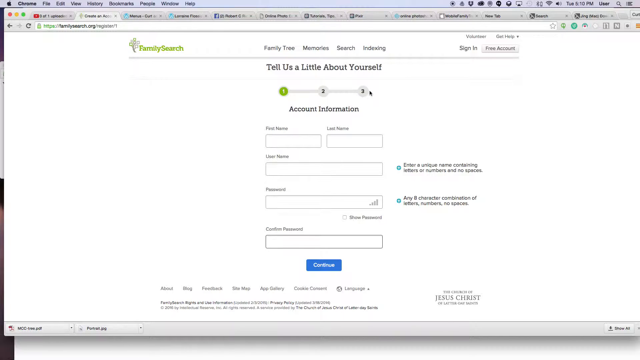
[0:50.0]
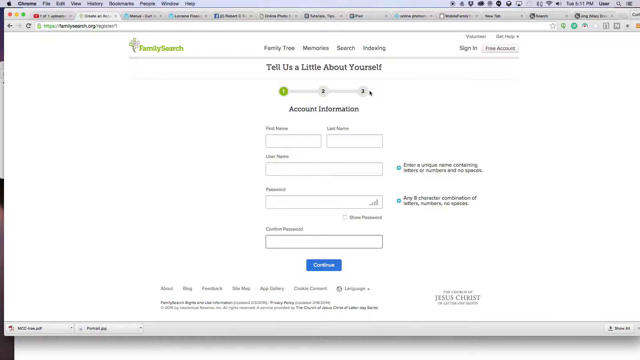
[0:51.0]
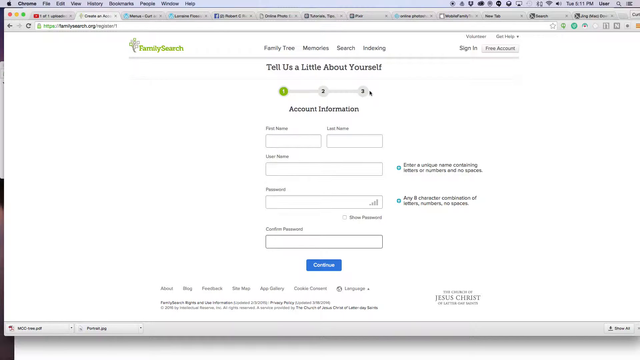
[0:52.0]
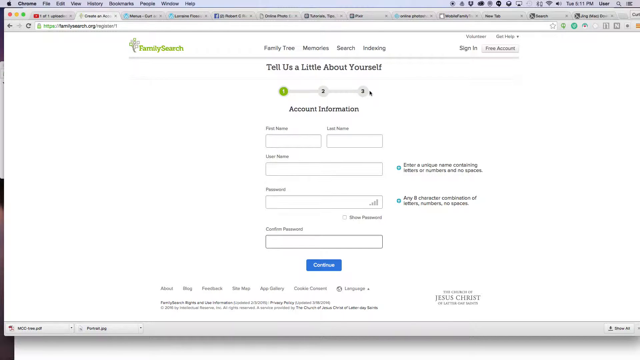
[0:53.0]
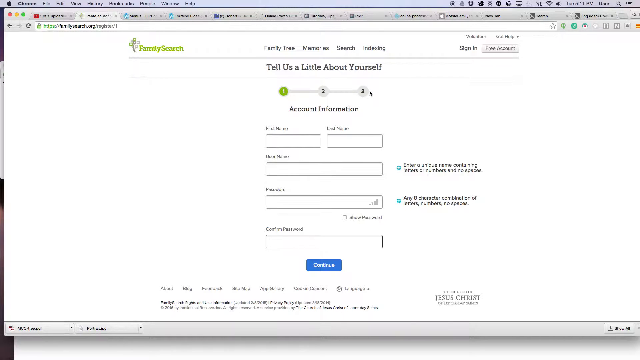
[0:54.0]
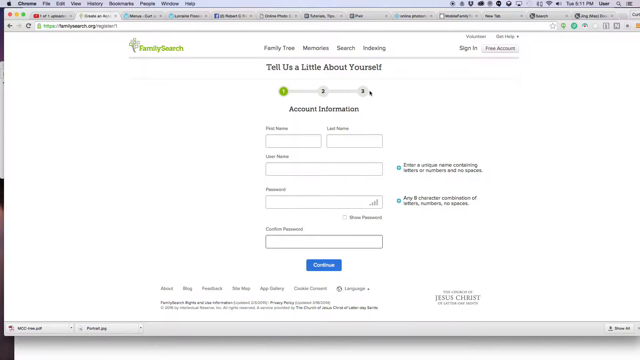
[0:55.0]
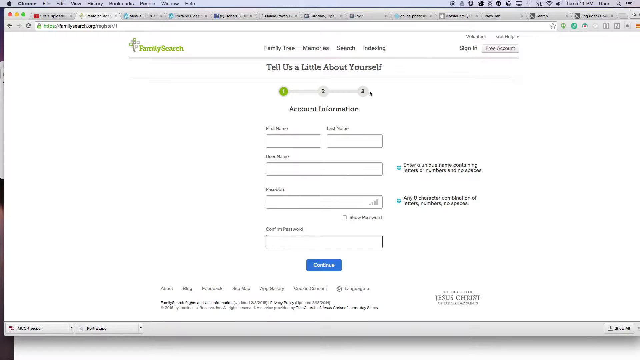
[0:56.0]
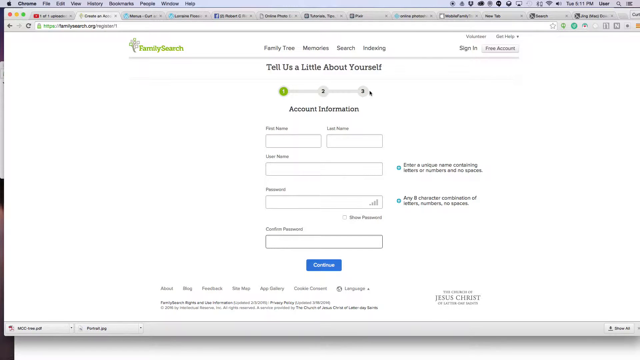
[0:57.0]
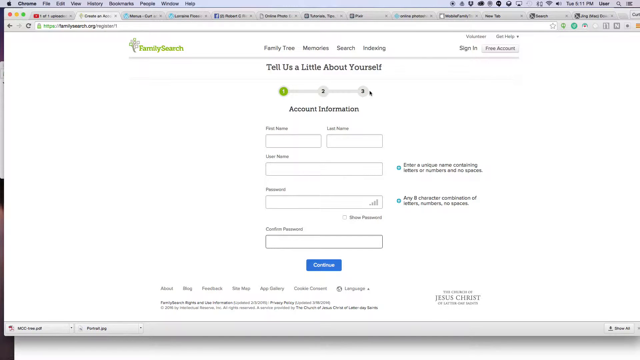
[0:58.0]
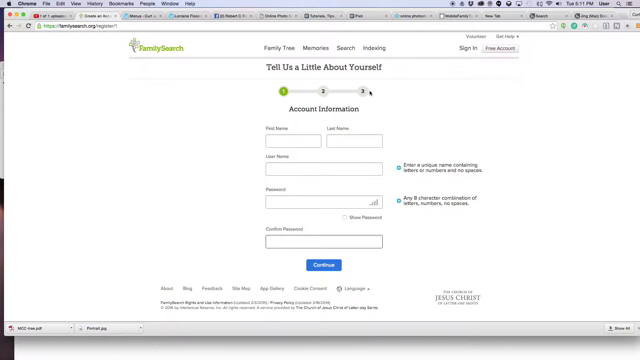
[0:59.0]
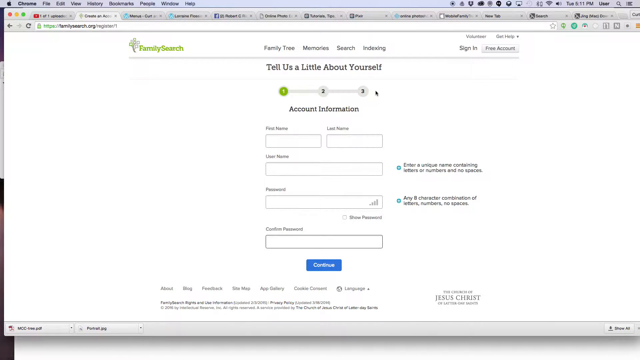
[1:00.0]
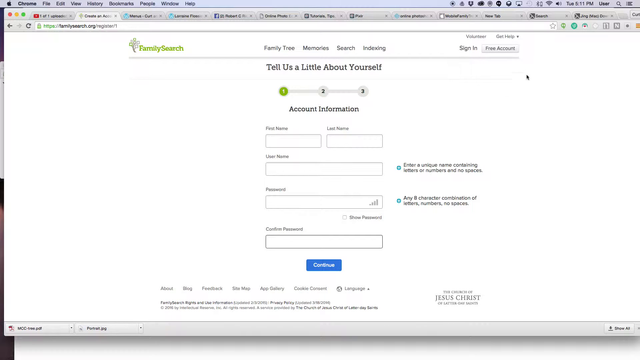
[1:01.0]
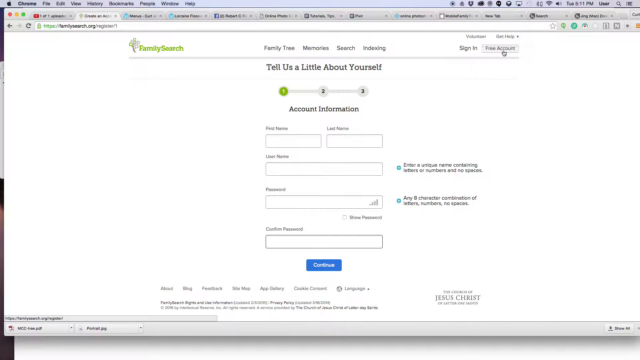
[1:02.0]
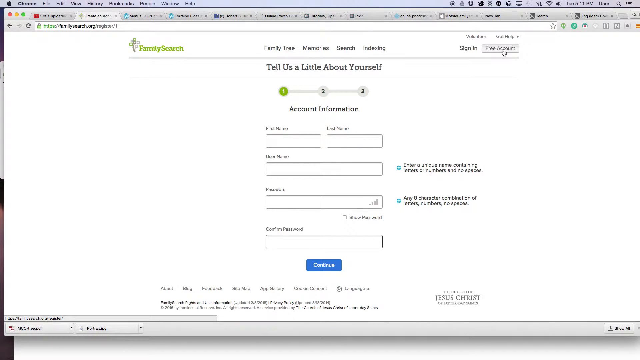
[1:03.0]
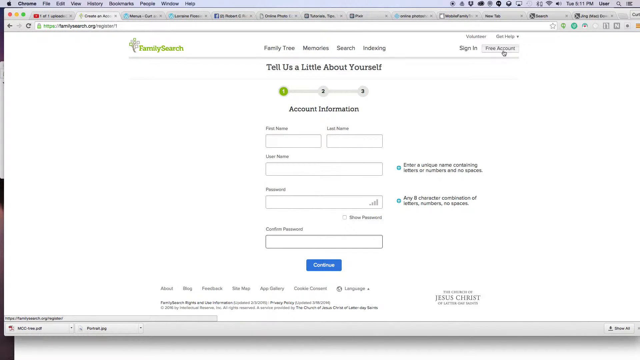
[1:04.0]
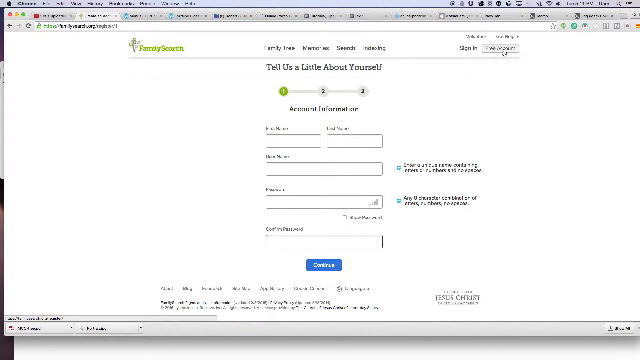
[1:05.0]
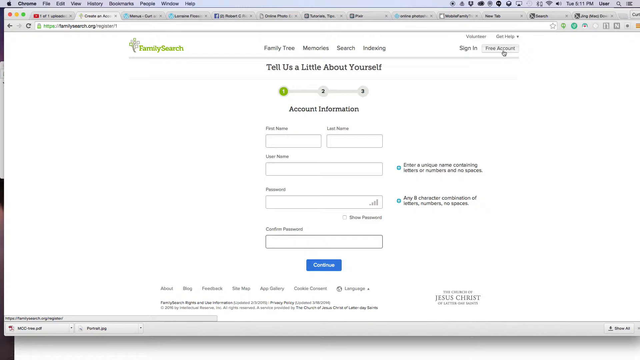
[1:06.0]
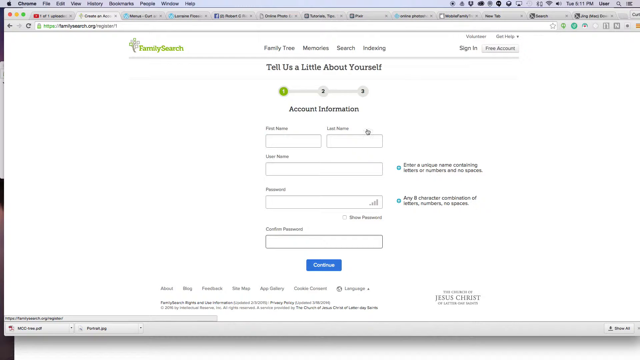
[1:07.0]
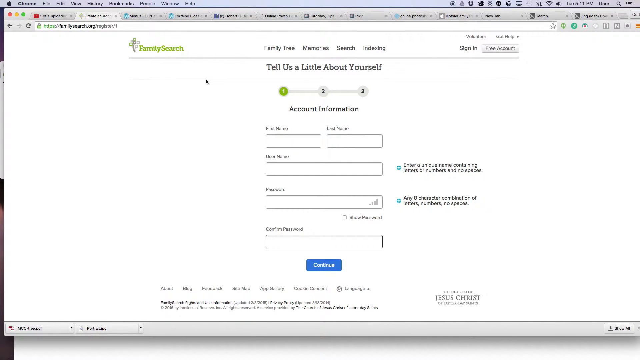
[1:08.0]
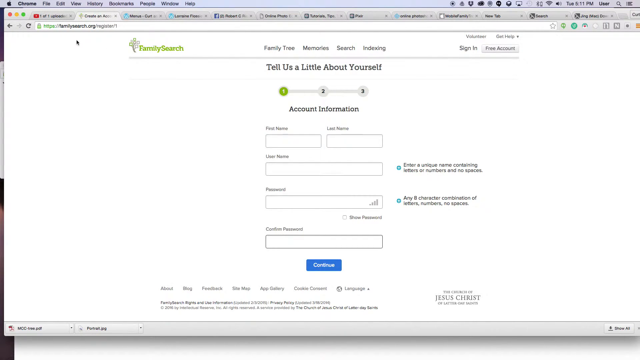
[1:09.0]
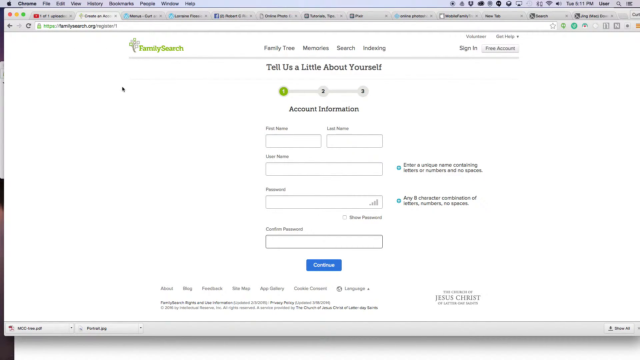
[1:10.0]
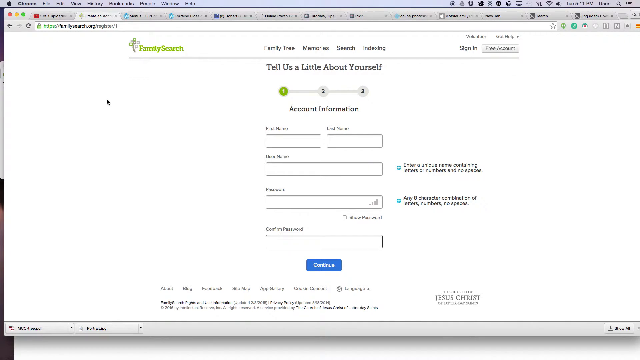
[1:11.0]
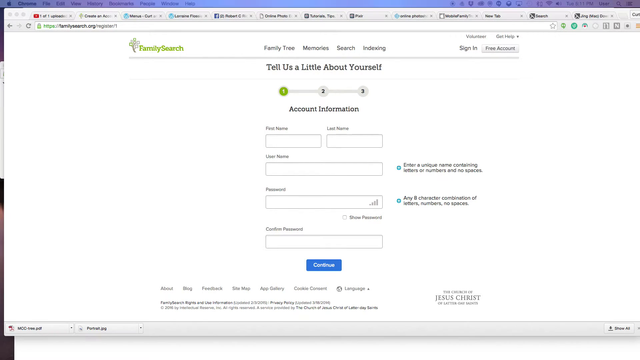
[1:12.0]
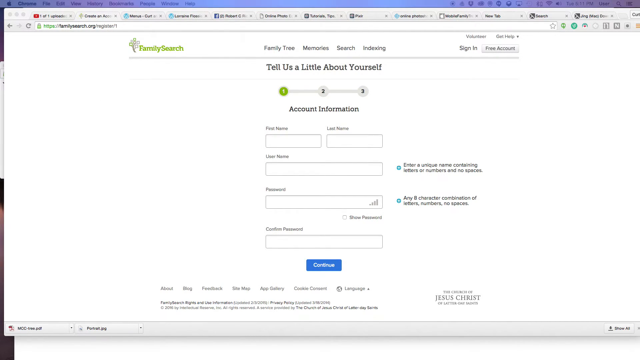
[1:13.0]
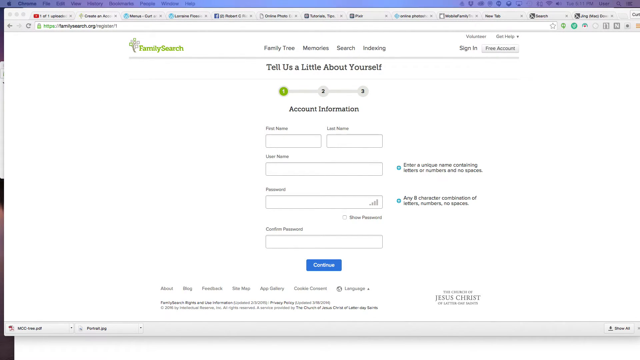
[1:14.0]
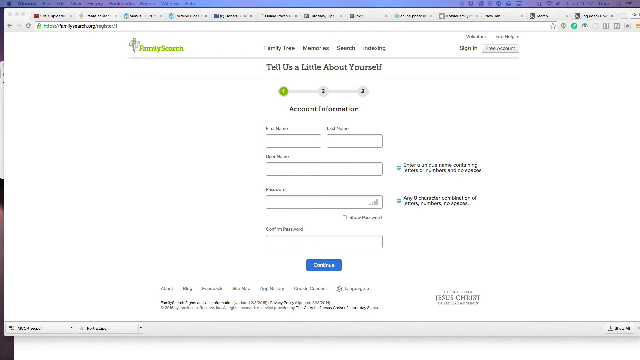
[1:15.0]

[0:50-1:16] The "tell us a little bit about yourself" page stays on screen and nothing seems to happen while the mouse is left still. The user then starts moving the mouse again, making counterclockwise circles around the sign-in and free account portions of the page, which were used to get to this section. Above those buttons there are some other items. The mouse moves to the left, but nothing is clicked. Above "tell us a little bit about yourself" are four sections: "Family tree", "Memories", "Search" and "Indexing".